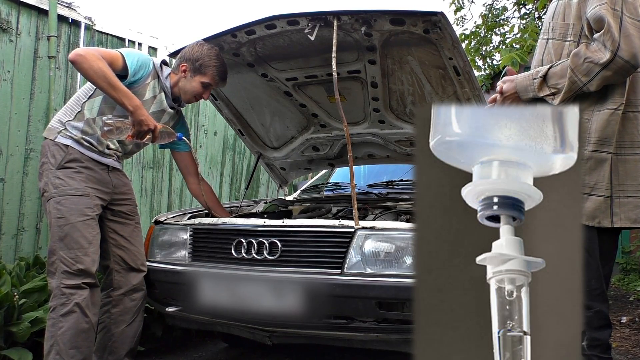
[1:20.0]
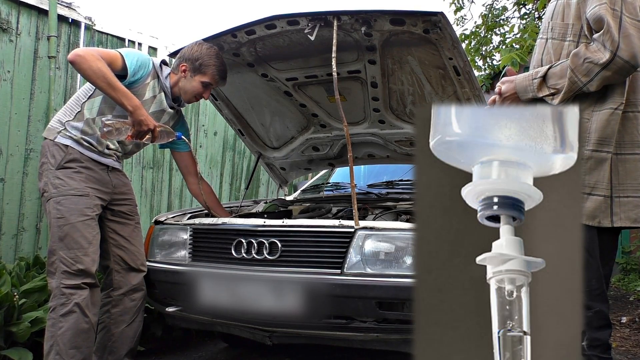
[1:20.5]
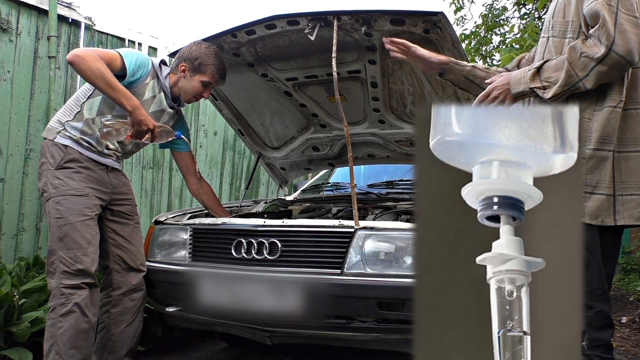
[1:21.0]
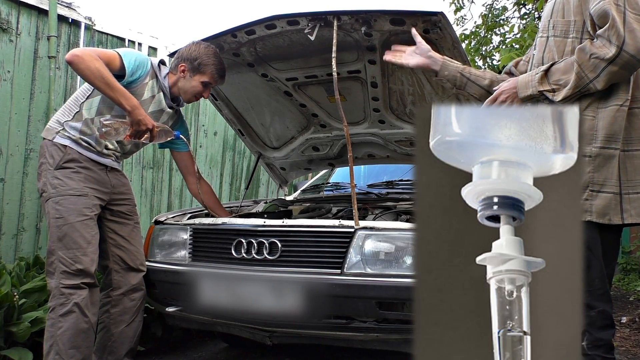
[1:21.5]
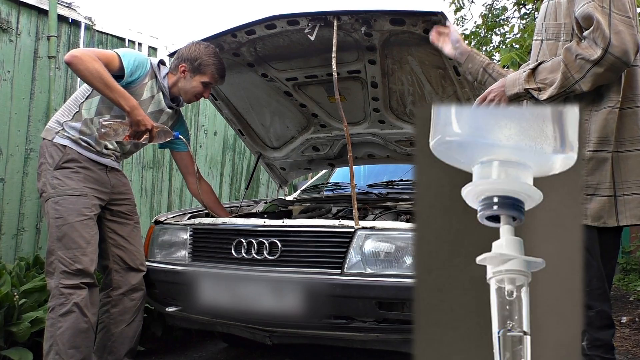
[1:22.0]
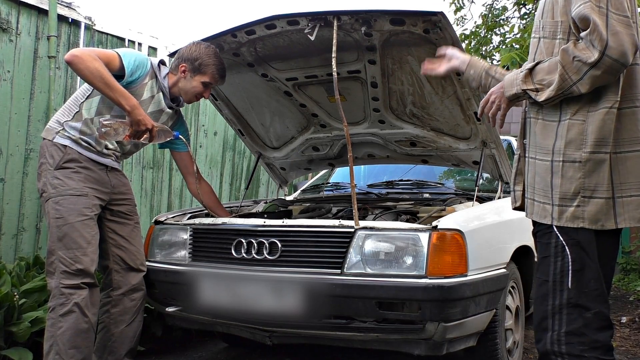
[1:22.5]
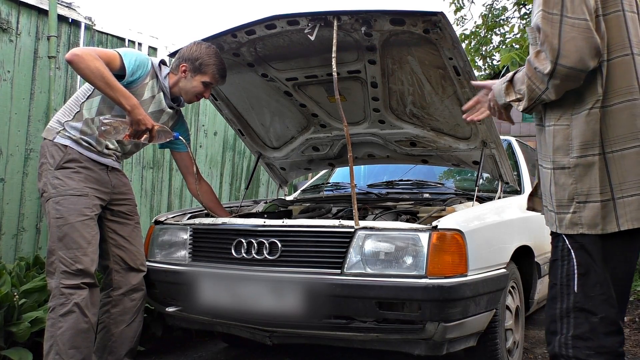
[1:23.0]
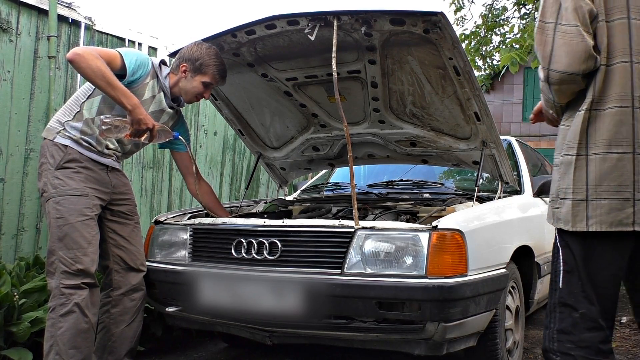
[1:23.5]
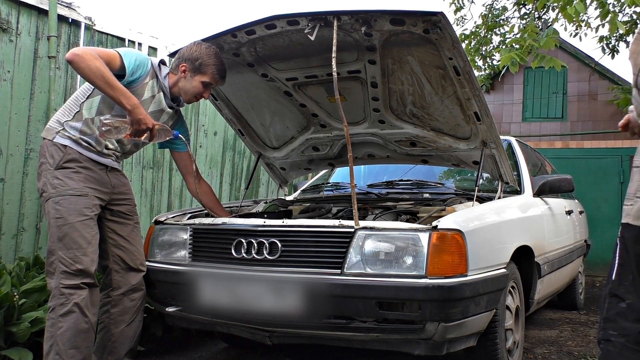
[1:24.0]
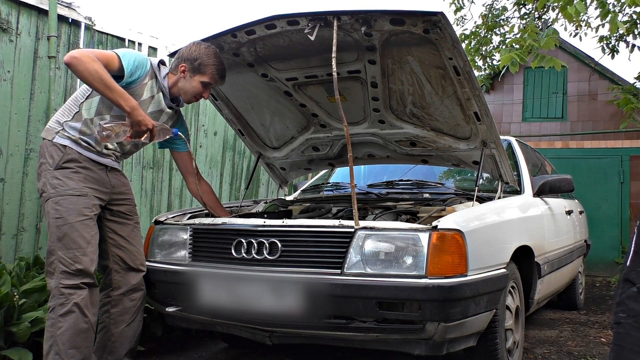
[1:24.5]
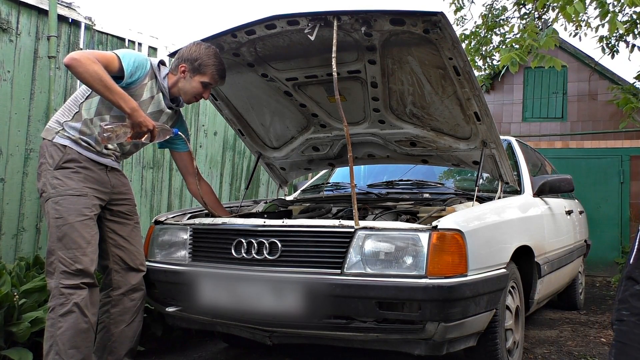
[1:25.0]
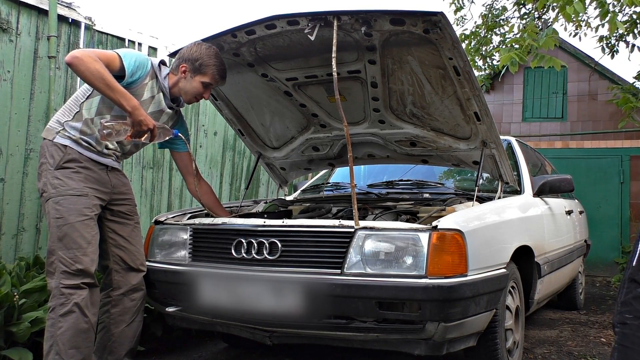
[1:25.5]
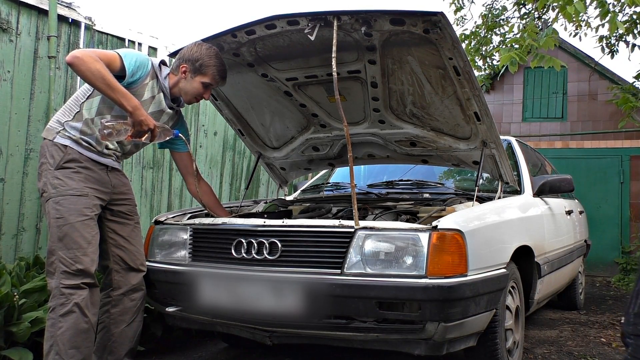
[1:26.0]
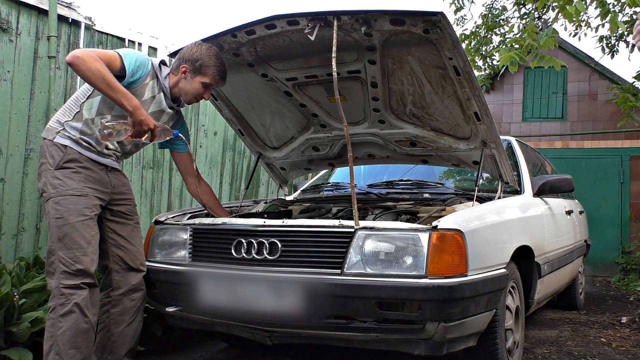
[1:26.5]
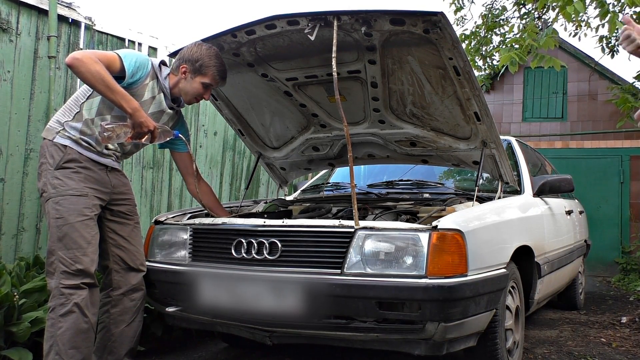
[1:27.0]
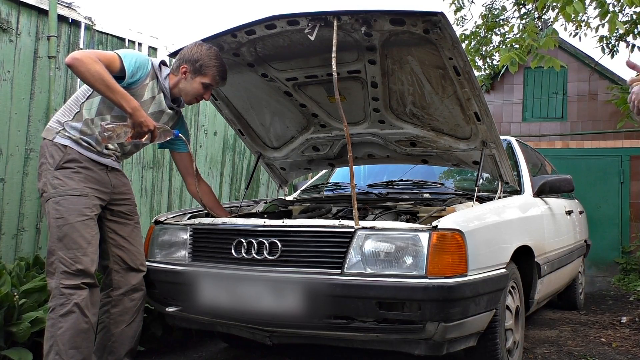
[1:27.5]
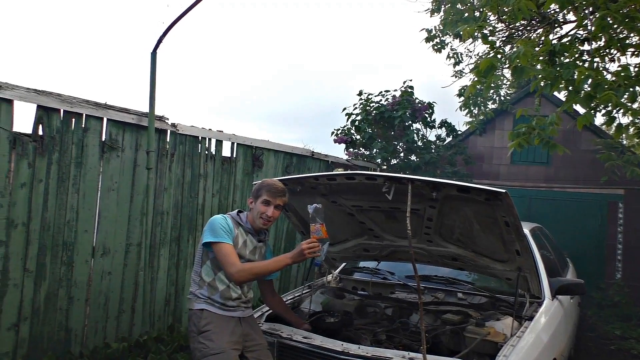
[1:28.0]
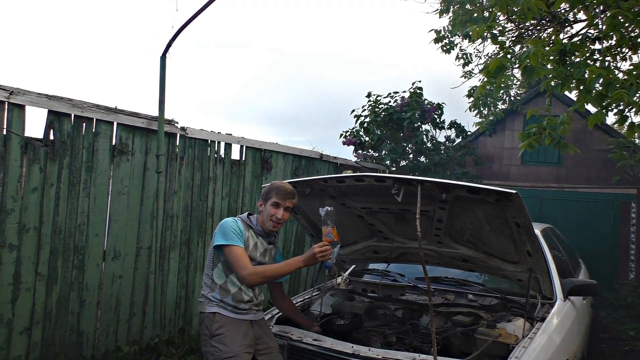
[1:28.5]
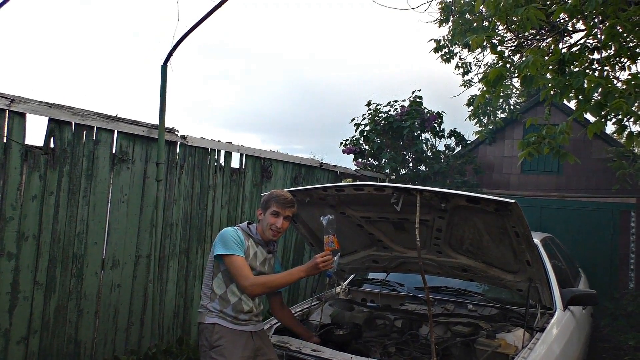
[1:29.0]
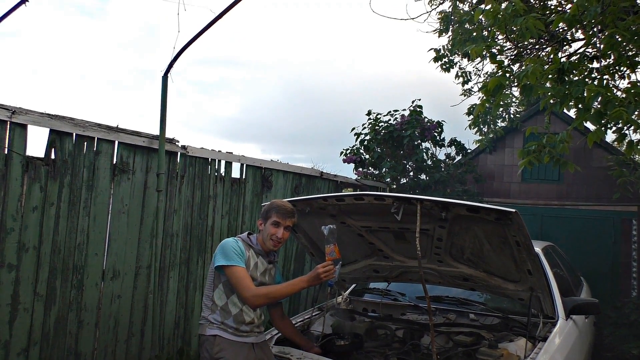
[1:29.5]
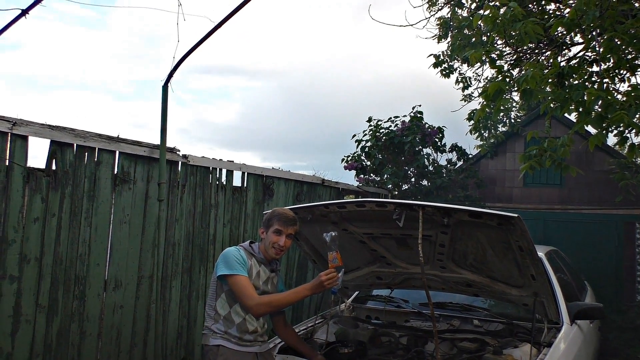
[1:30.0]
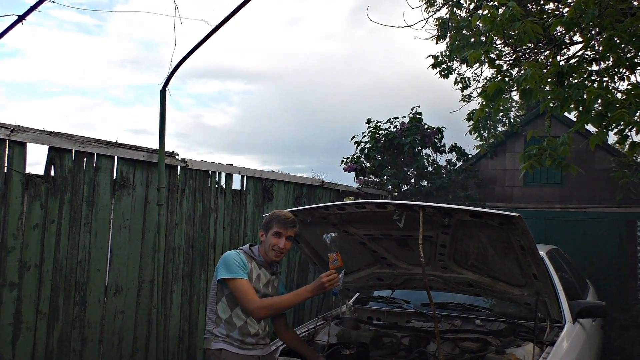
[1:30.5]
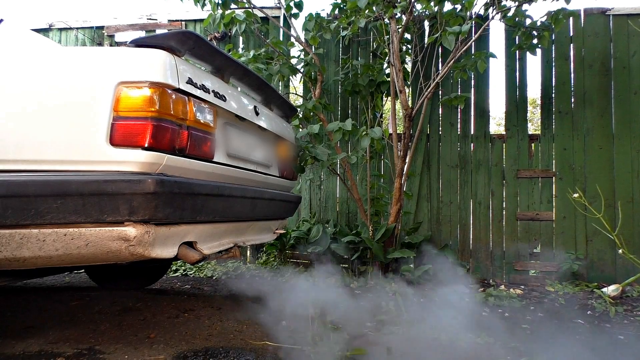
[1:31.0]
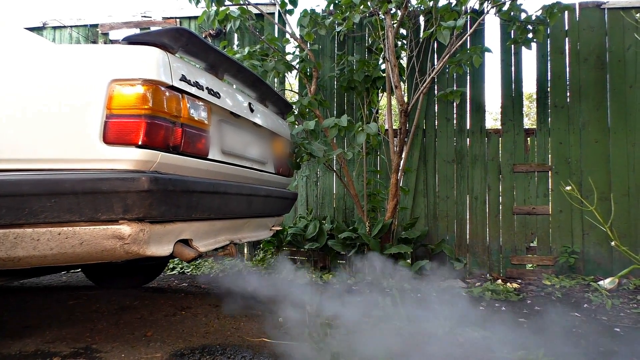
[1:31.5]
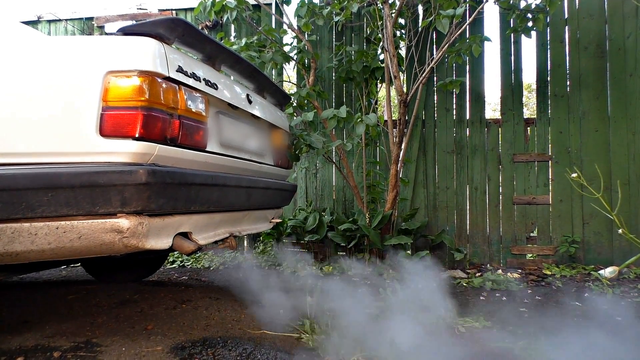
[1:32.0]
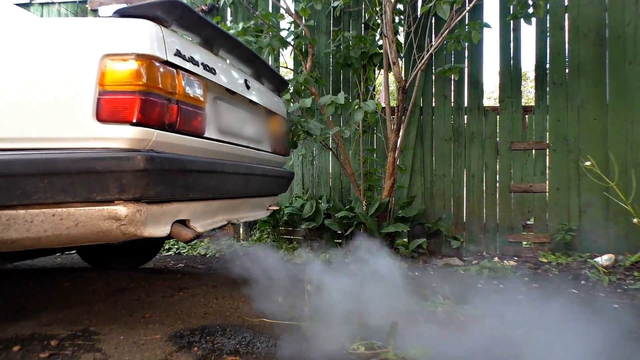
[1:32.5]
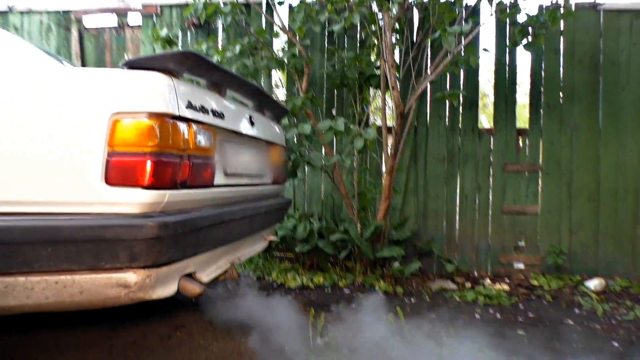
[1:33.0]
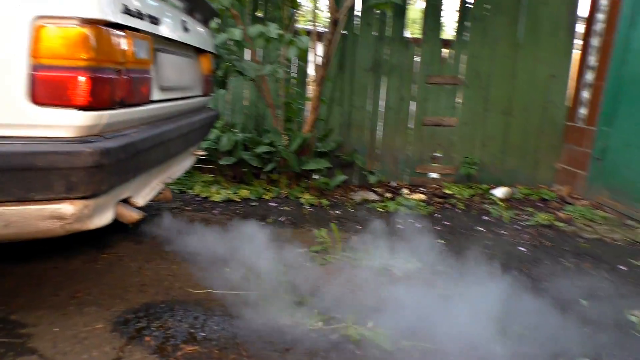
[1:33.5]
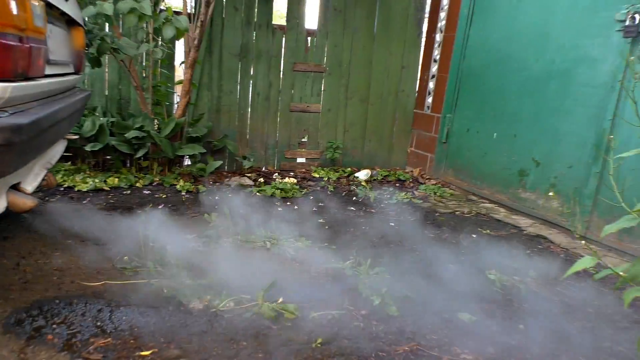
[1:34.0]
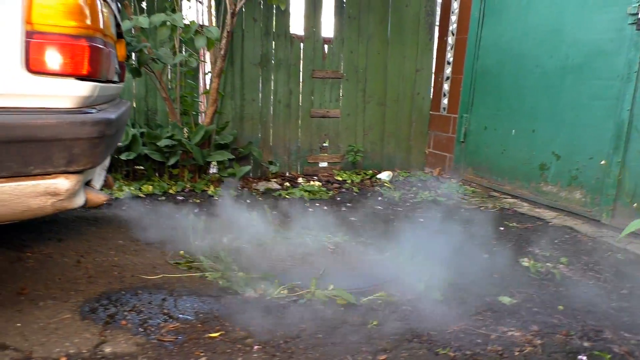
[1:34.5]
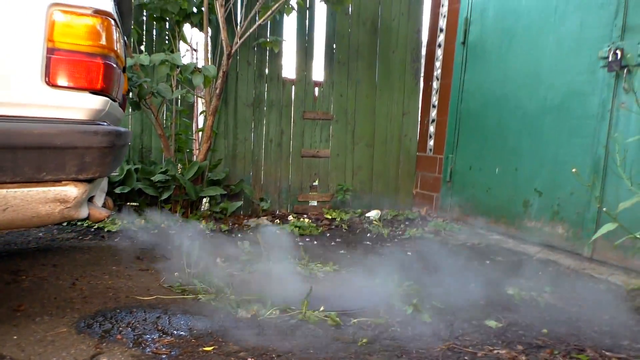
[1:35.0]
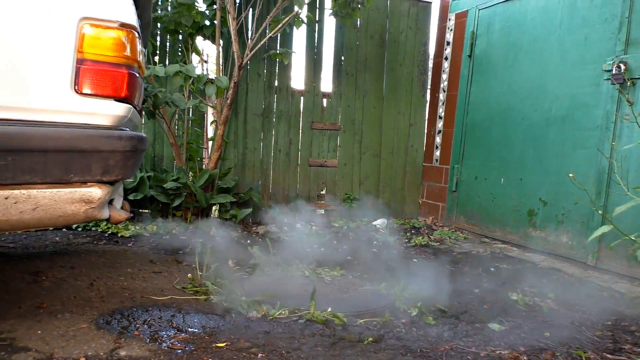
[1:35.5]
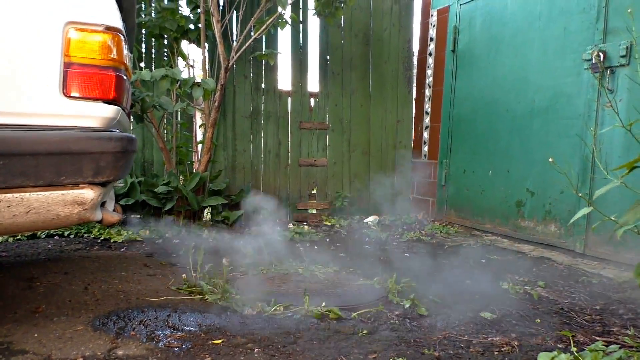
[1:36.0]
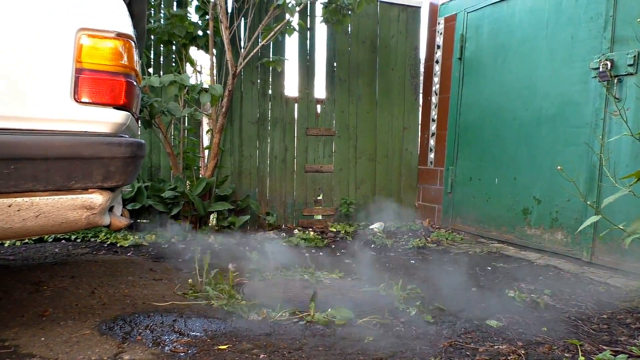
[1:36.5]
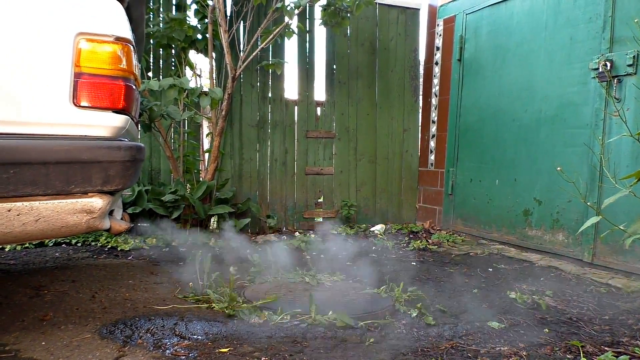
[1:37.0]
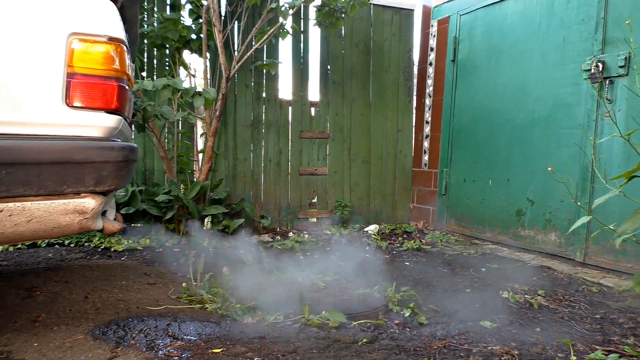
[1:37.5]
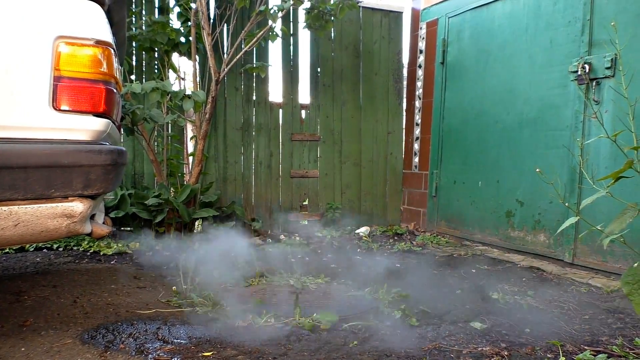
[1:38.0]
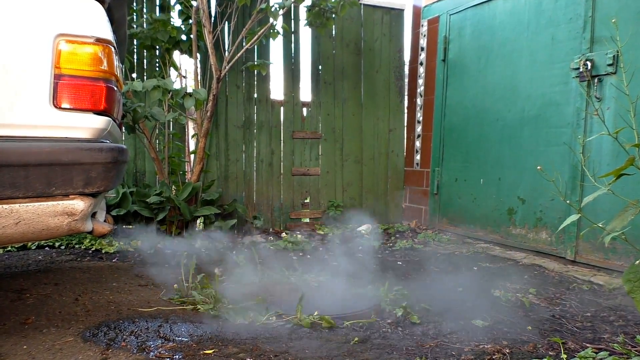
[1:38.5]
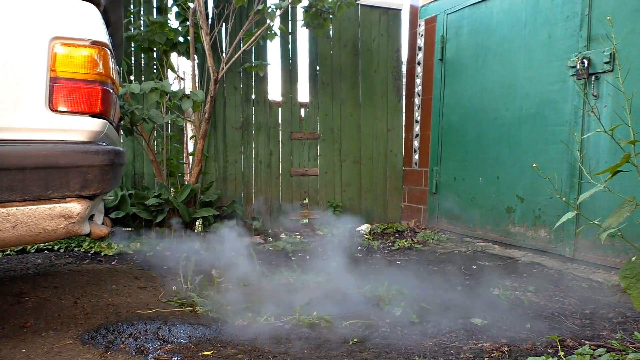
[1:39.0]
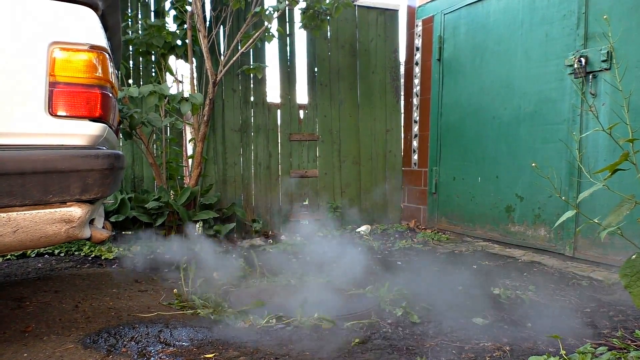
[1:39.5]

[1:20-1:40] He says the vapor contains the carbon that was collecting in the combustion chamber and the valves for a long time. The tailpipe is shown with white smoke coming out of it, and text says the car may shake violently and that there may be drops in engine work. A young man pours things into the engine while holding up a drip bag that looks kind of like an IV bag, while the man in the brown shirt with black stripes is in front talking. The two work together to get the mixture in, one showing how it is done and the other speaking. When the camera pans back to the tailpipe, a lot of white smoke is coming out. A fence and some trees are in the background.